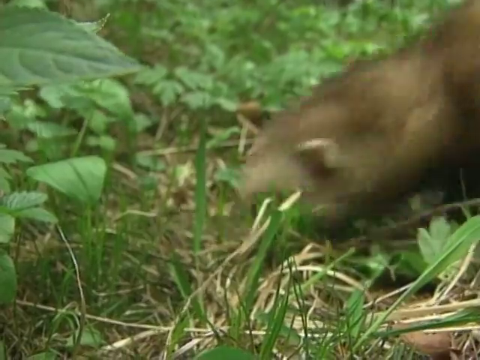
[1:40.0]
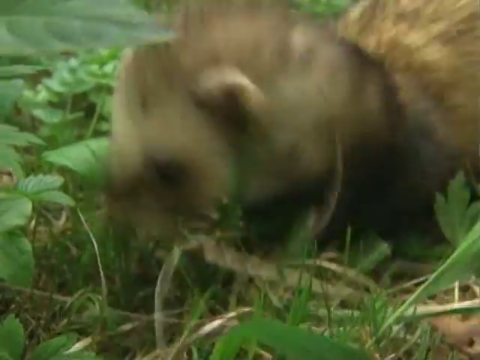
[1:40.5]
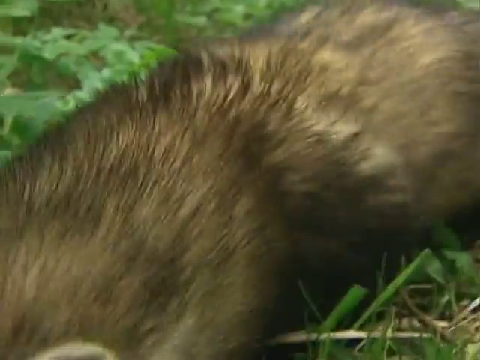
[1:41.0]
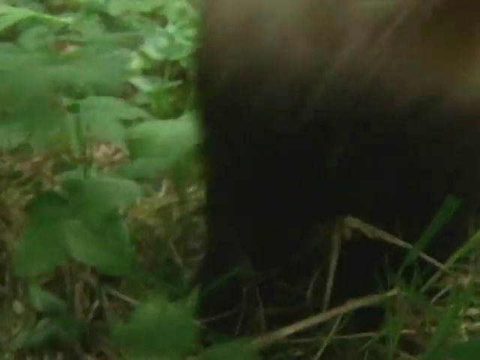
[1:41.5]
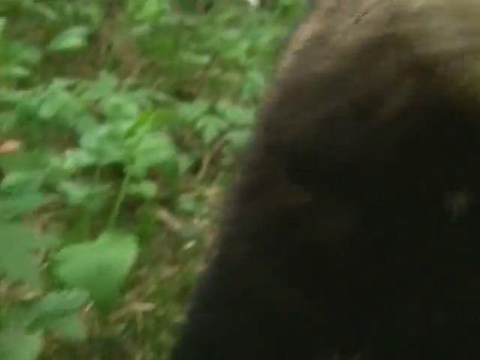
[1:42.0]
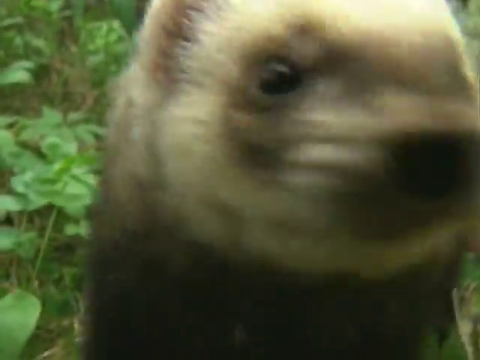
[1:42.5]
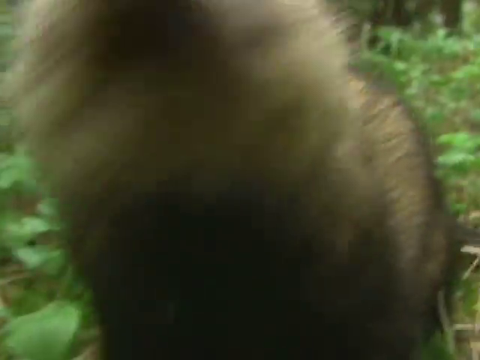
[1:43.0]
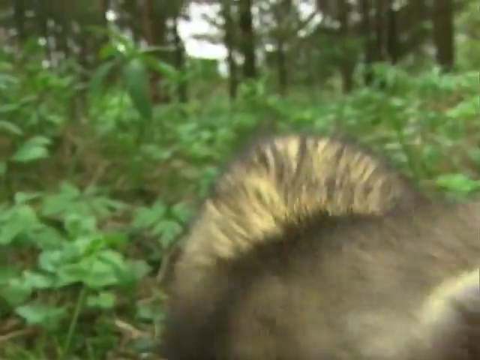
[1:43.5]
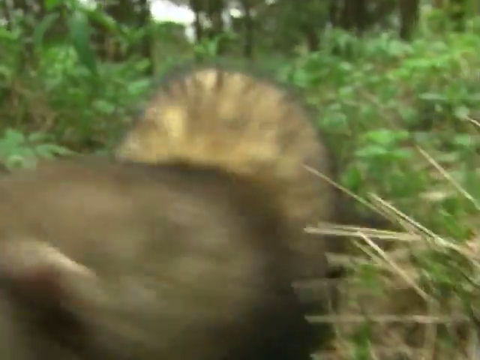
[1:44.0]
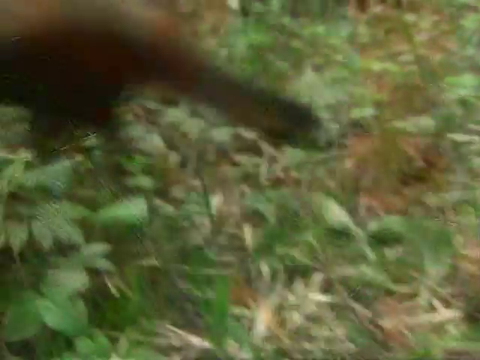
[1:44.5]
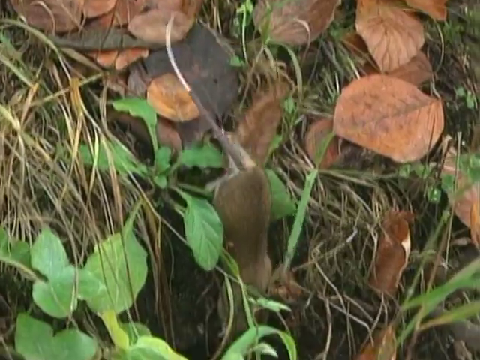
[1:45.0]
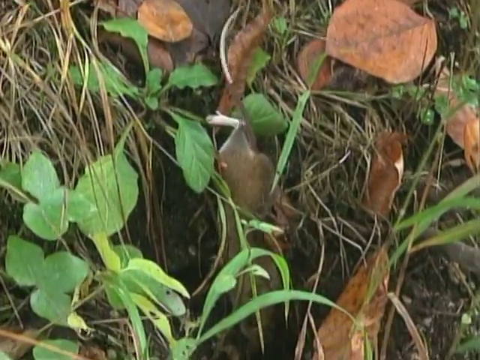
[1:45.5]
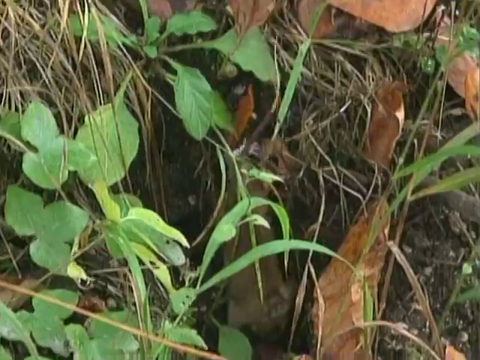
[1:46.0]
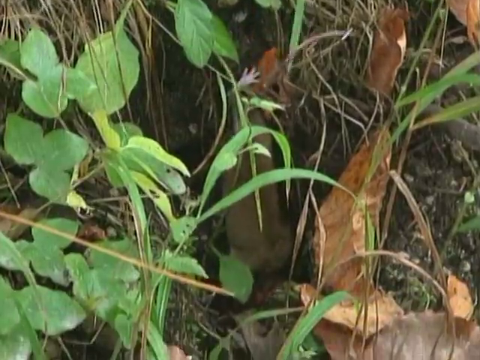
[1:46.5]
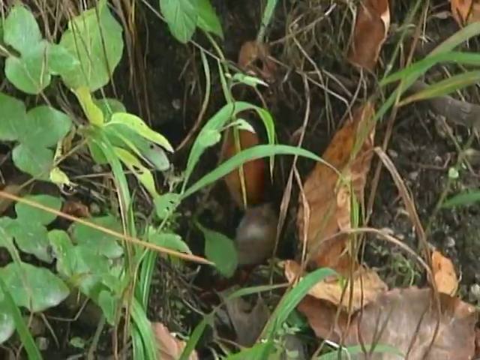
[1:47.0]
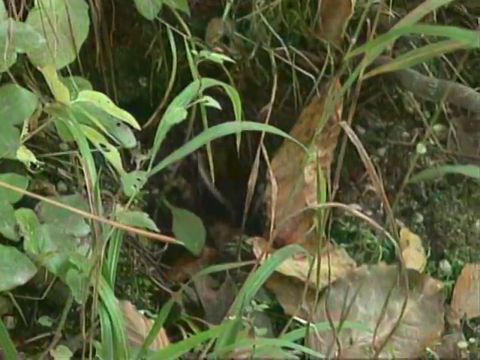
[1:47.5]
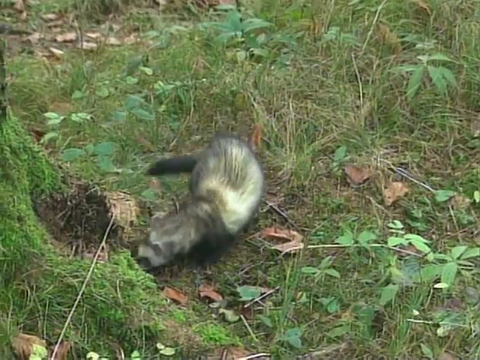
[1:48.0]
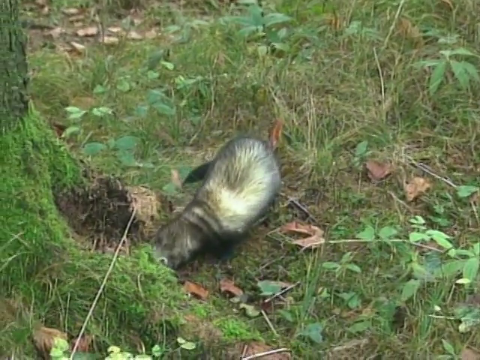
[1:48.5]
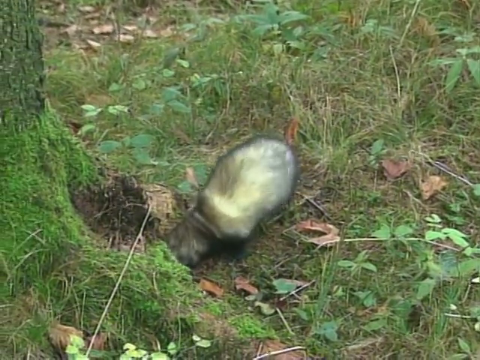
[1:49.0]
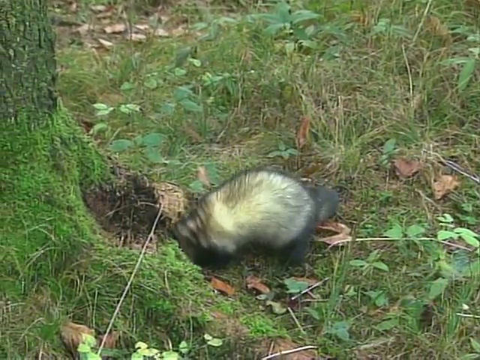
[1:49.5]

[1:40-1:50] Different rodents run through the grass, rolling around. A ferret or weasel looks around, sniffing the camera and the grass around it, and bounces around. A shrew or something similar crawls into a little hole in the grass. The ferret appears to be digging in the grass, digging down near a tree trunk and looking around in the grass.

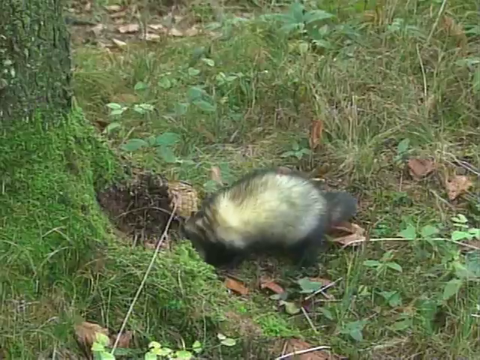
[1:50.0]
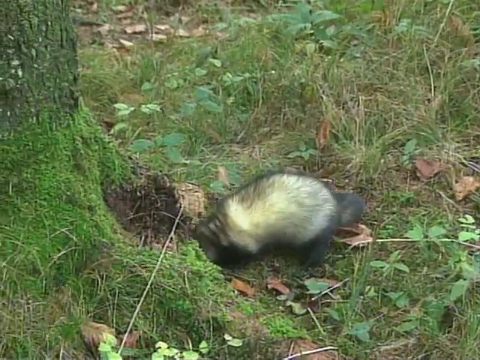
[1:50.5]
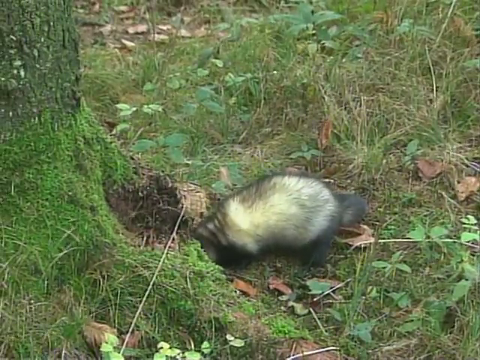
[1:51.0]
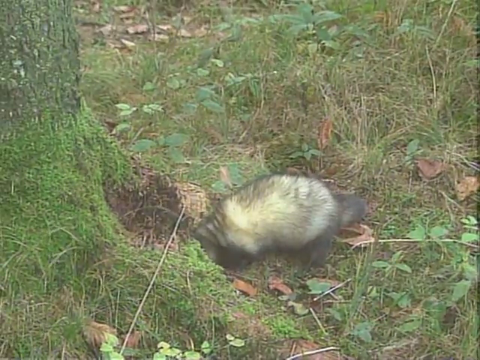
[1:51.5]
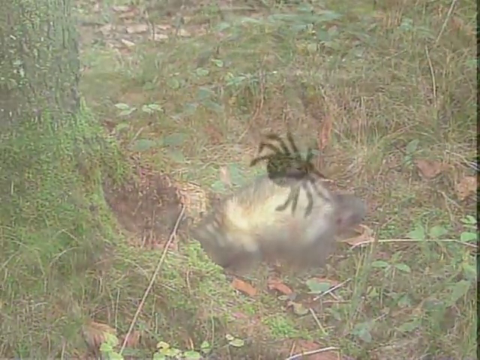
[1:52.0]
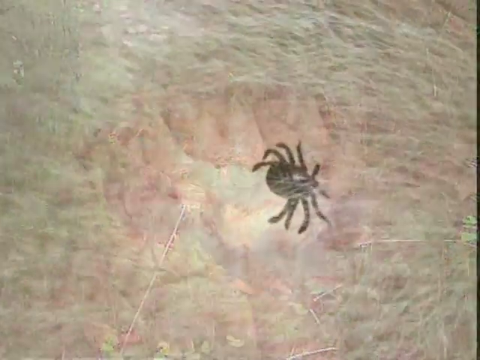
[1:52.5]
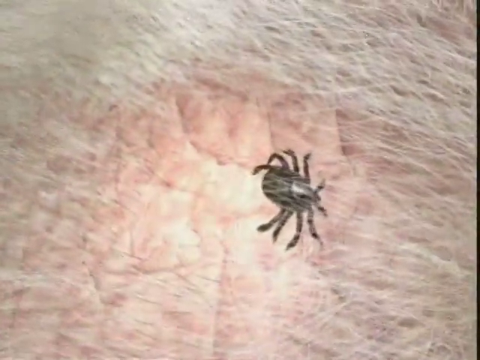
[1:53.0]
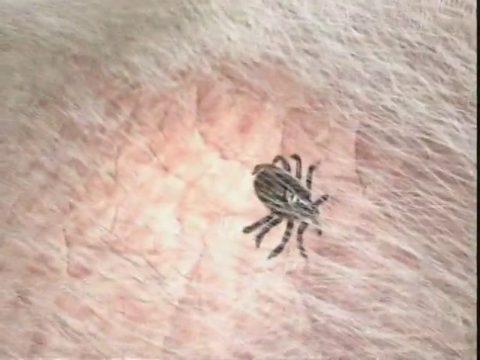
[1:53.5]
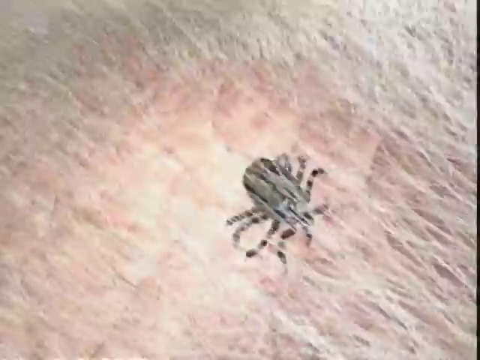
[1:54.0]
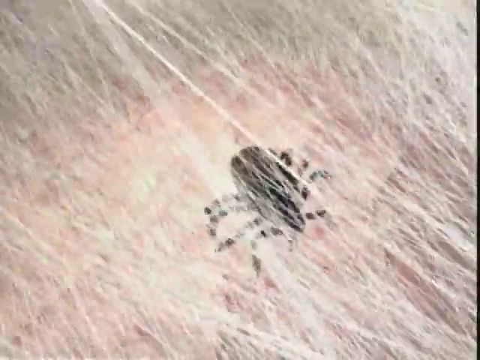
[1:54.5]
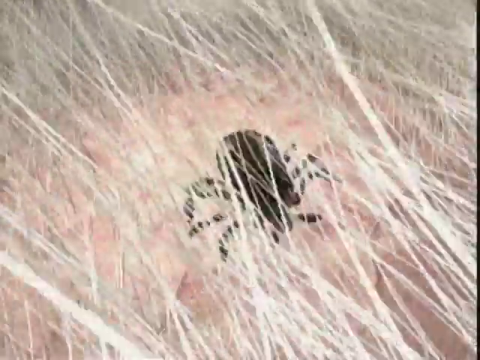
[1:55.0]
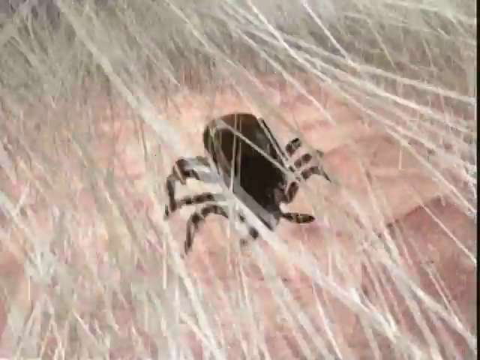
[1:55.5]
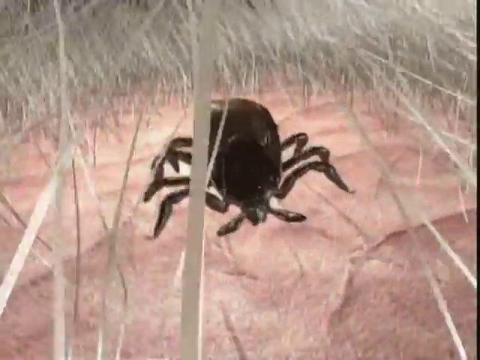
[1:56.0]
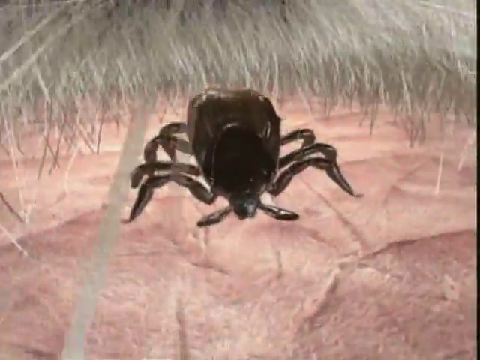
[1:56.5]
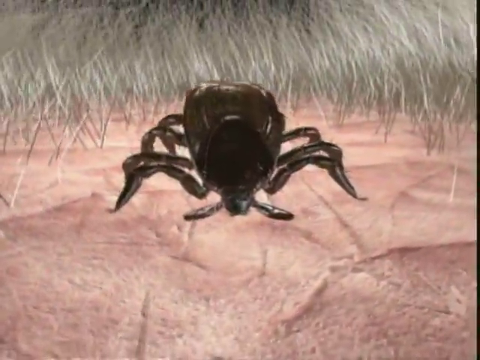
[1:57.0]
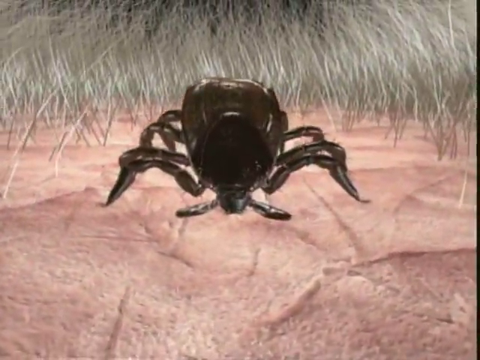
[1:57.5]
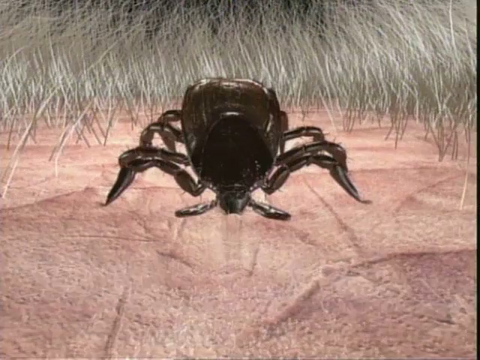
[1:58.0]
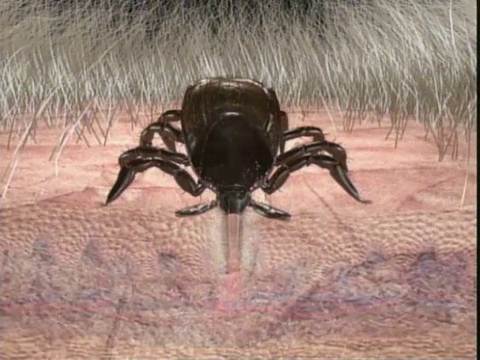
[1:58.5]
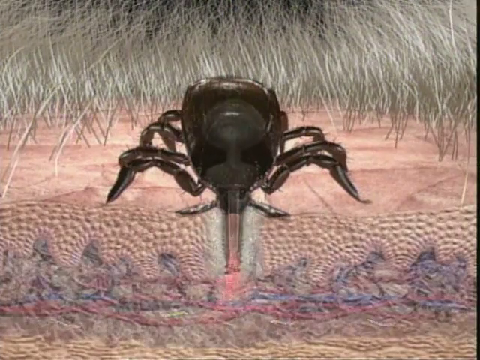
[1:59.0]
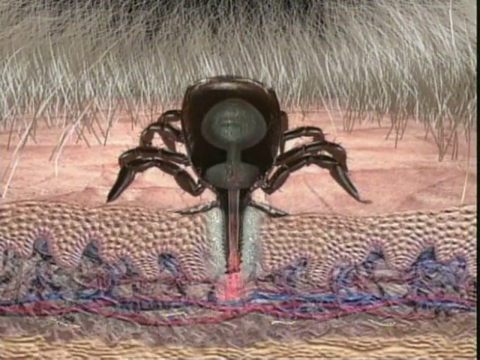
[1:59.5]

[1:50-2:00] A ferret or weasel is by the base of a tree trunk in a grassy area, with moss along the tree trunk on the left-hand side of the screen. It does some digging. The scene transitions to a 3D rendering of a tick on a host, with rendered hair, and a close-up of the tick. It appears to explain how the tick latches on and feeds off the host: a demonstration shows the tick entering its proboscis or head into the host, and the pathway the blood would take from the host into the tick's abdomen.